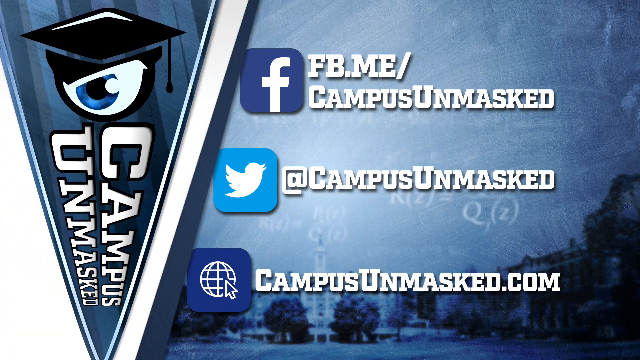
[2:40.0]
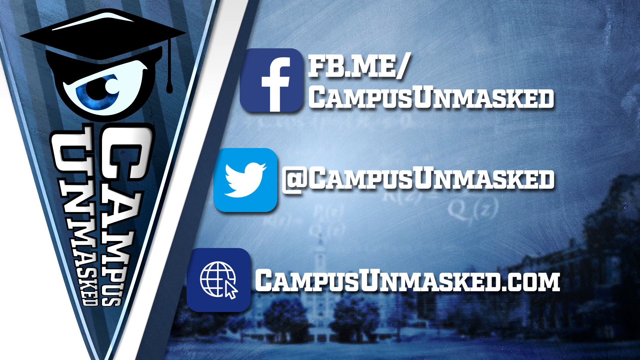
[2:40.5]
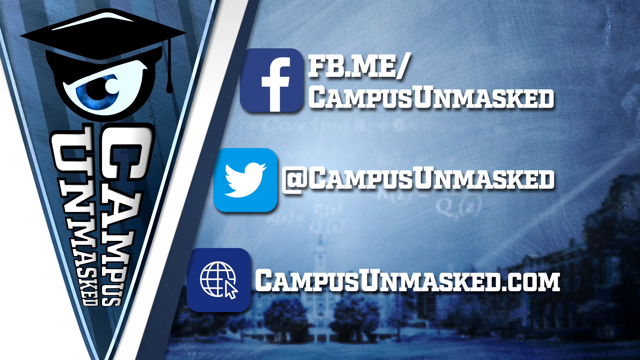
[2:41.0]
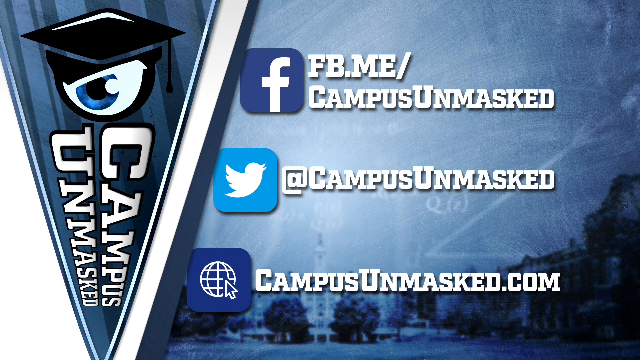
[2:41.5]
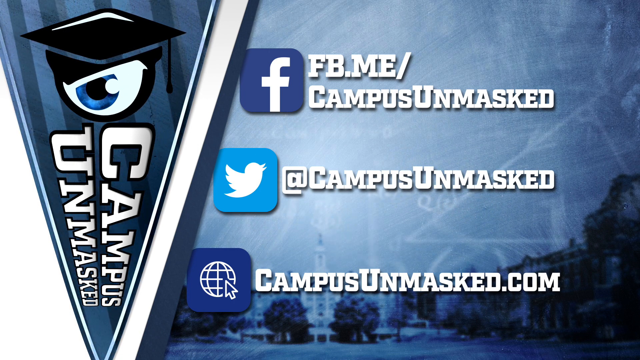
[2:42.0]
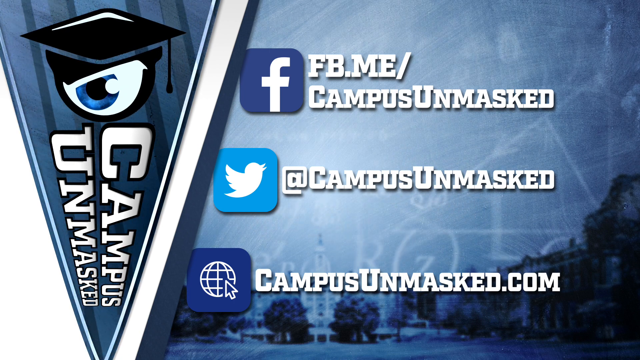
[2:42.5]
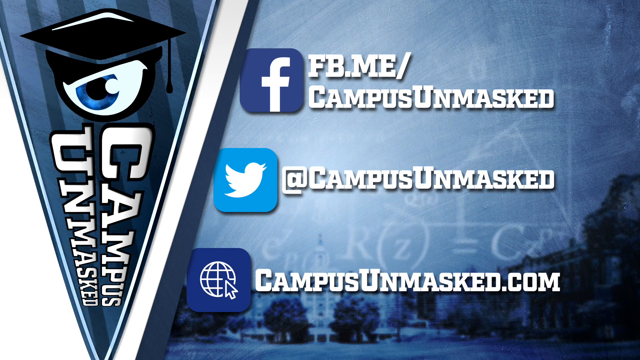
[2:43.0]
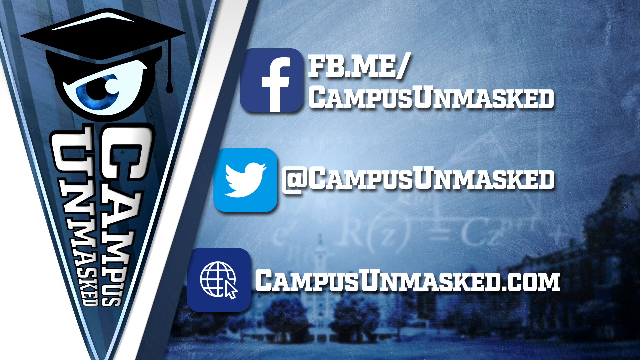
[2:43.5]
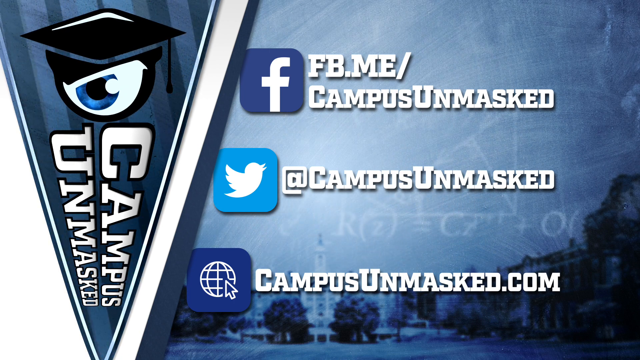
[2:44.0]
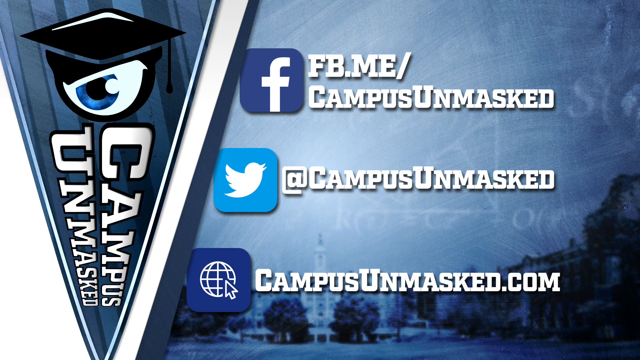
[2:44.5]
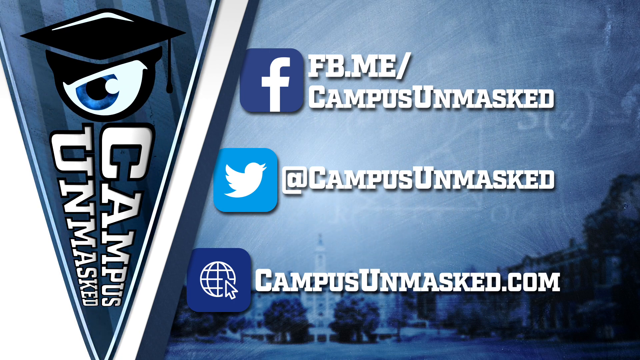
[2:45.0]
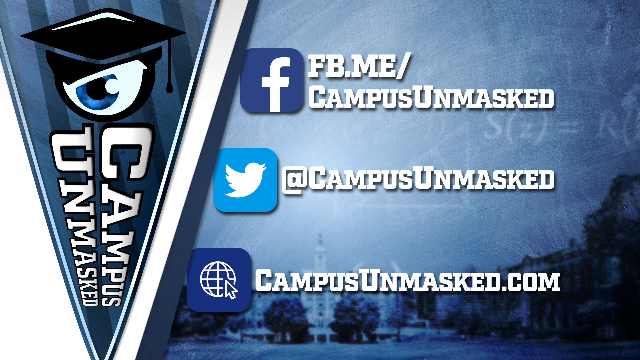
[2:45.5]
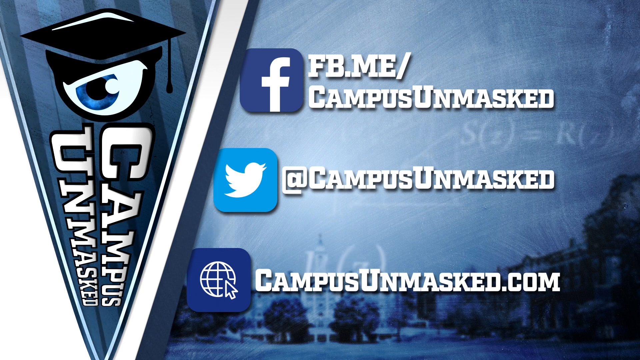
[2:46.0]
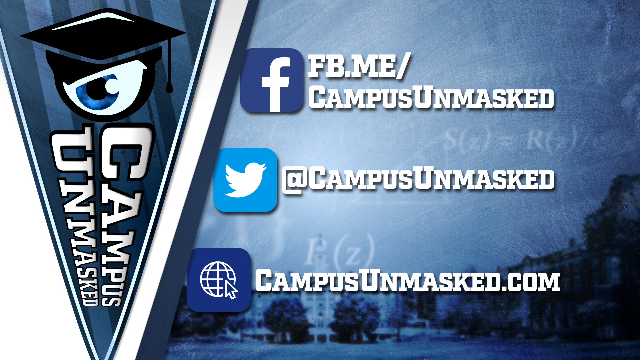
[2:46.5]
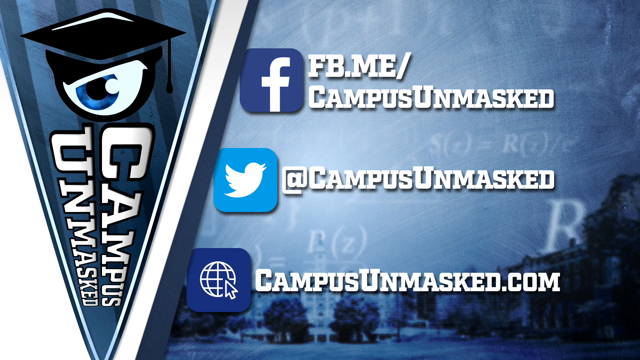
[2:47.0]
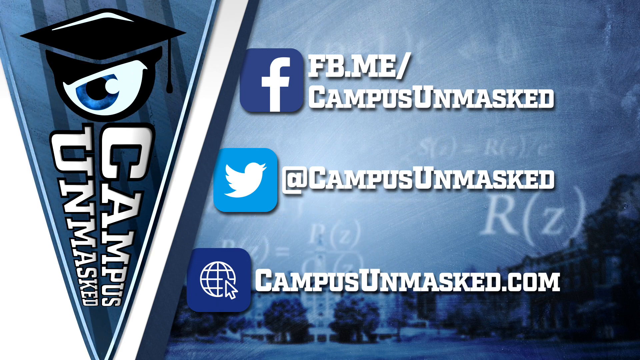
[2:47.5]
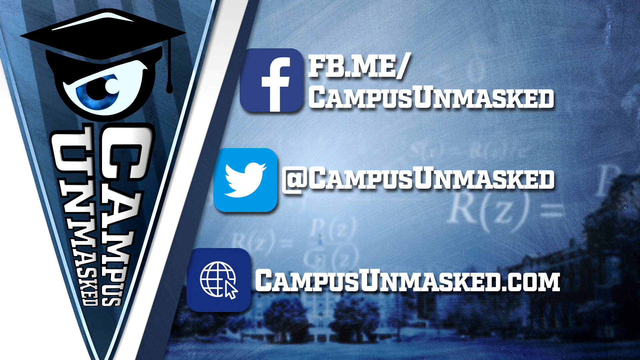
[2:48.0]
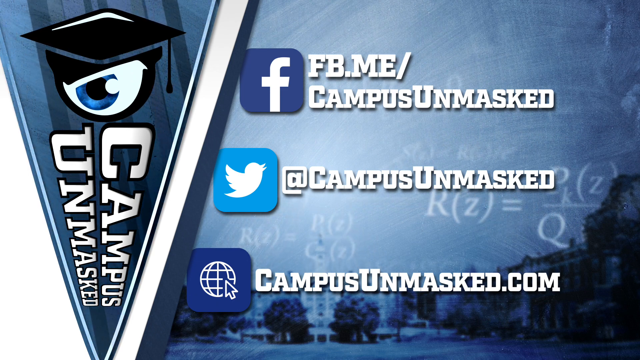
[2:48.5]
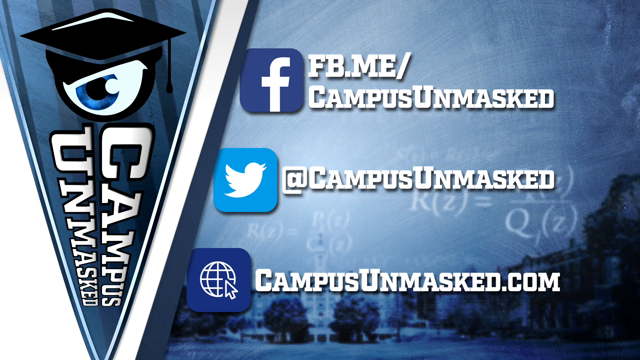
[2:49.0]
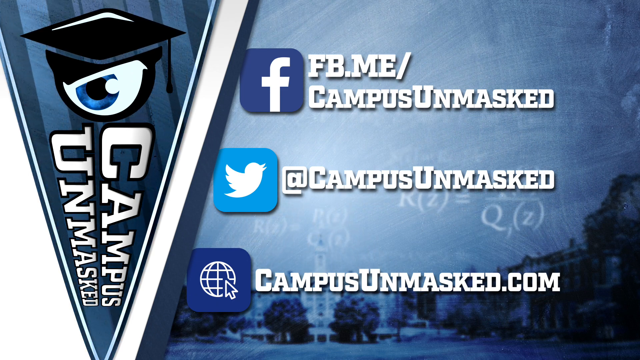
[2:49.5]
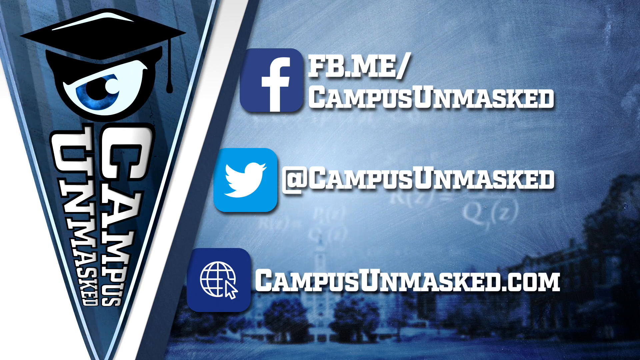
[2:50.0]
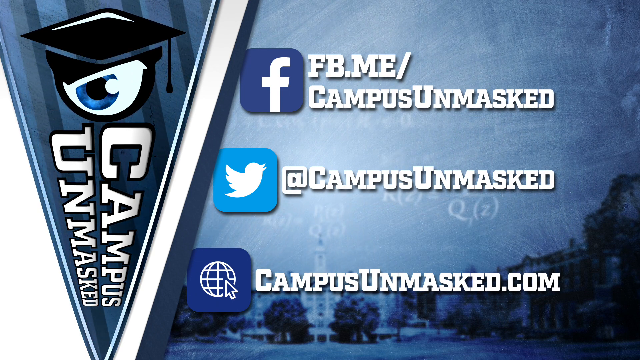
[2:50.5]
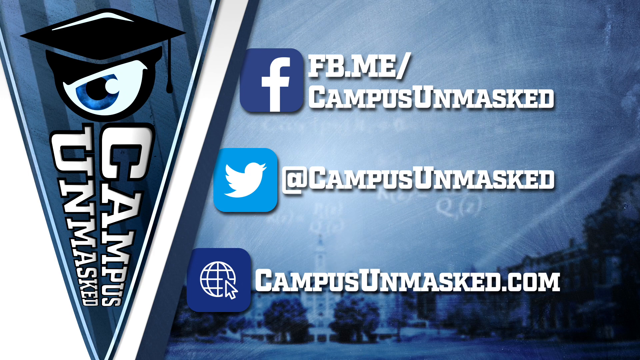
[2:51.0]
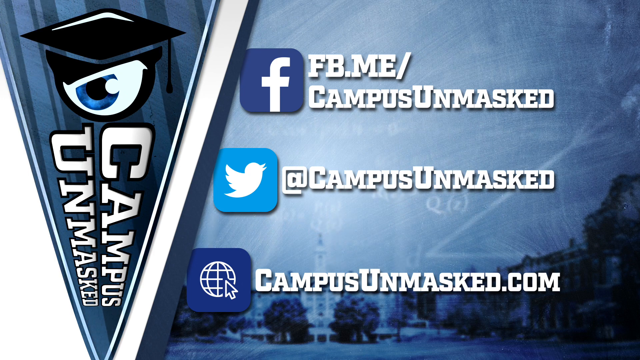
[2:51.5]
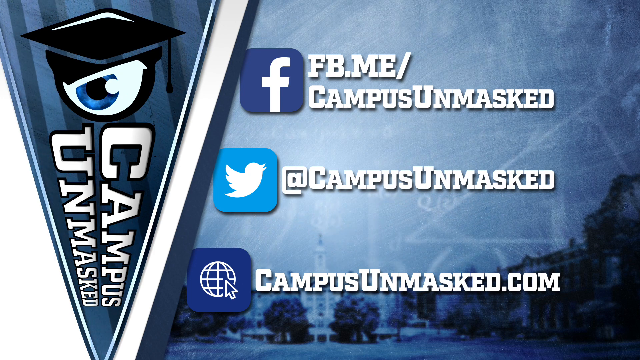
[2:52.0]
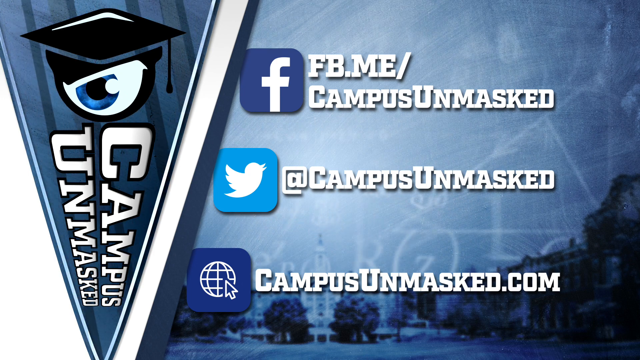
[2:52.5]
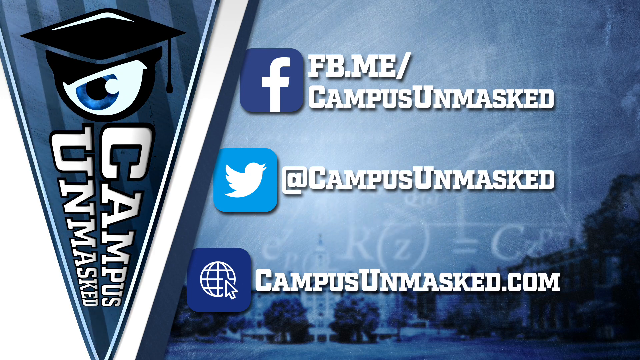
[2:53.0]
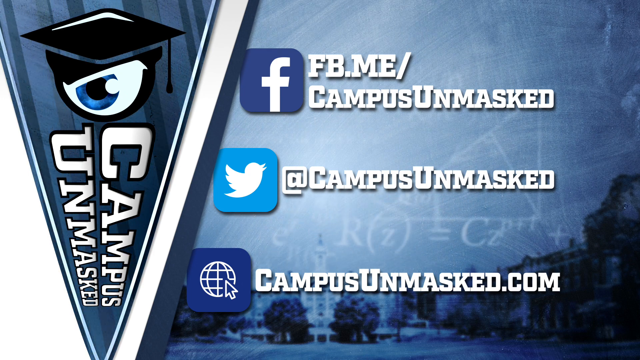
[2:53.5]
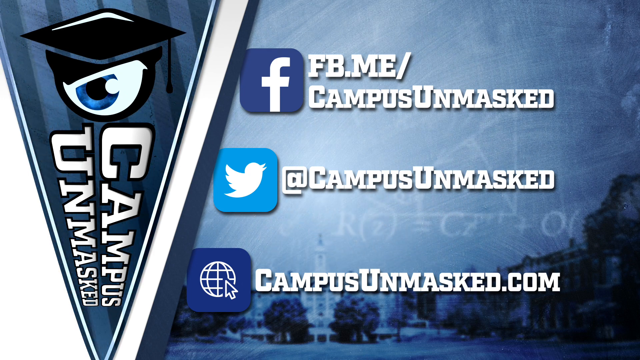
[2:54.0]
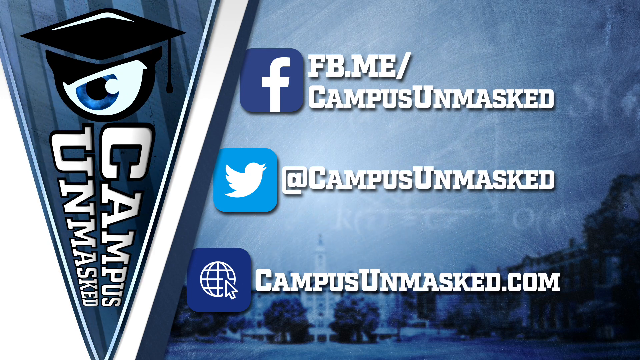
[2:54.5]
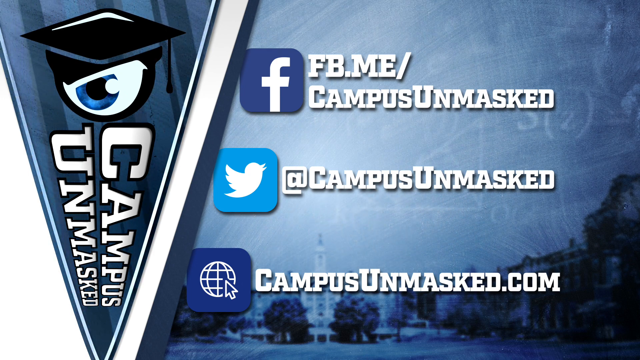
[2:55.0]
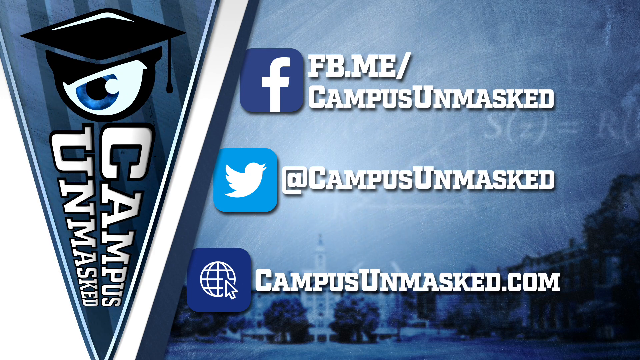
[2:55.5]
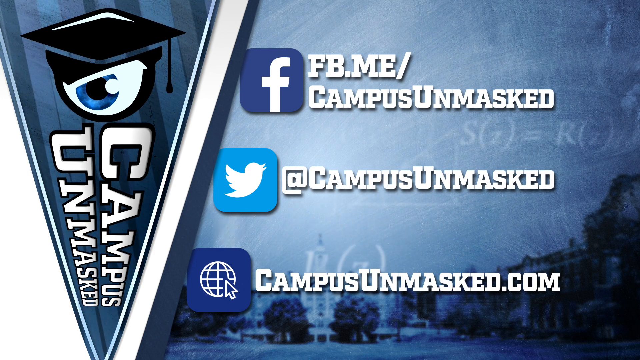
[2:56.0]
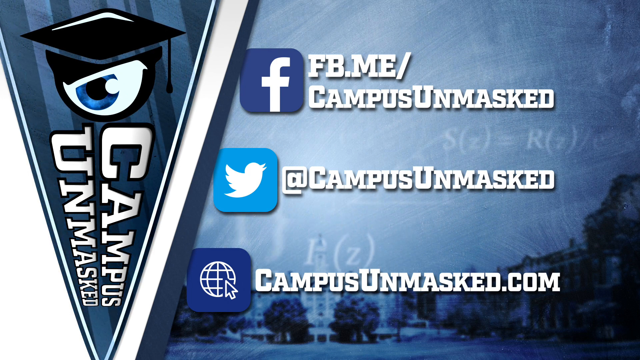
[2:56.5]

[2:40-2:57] Eric Sprenkle's follow-up tweet reads "The biblical God regularly punished disobedience. The power difference deity versus mortal and the potential for violence for saying no negates her yes. To put someone in this position is an unethical abuse of power at best and grossly predatory at worst." Rob Shimshock is not happy.